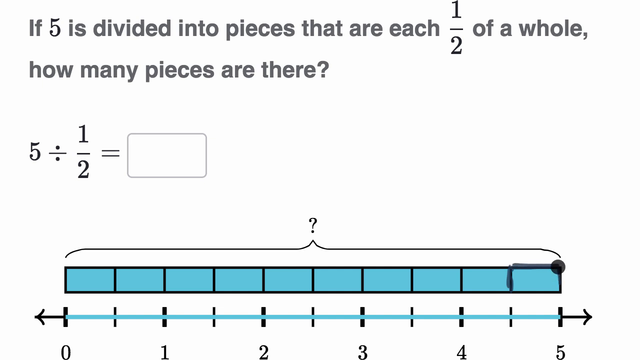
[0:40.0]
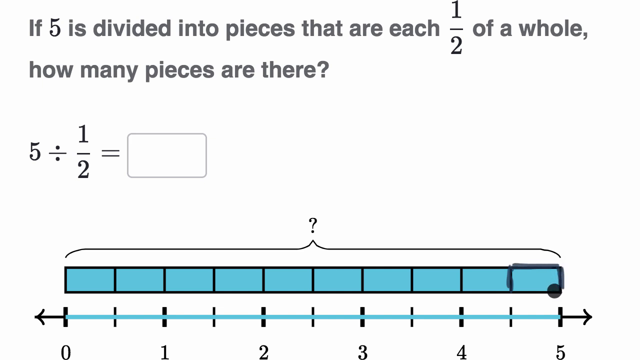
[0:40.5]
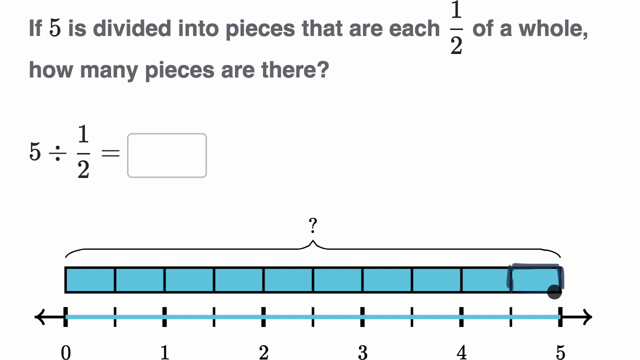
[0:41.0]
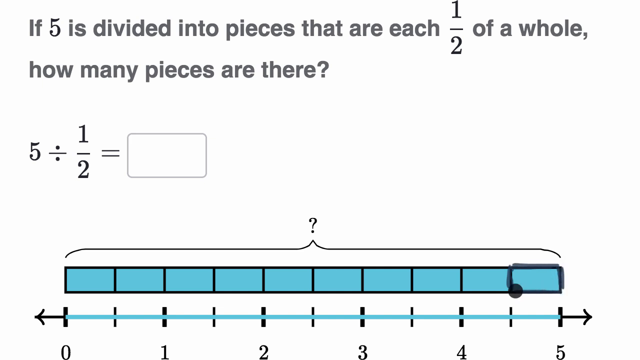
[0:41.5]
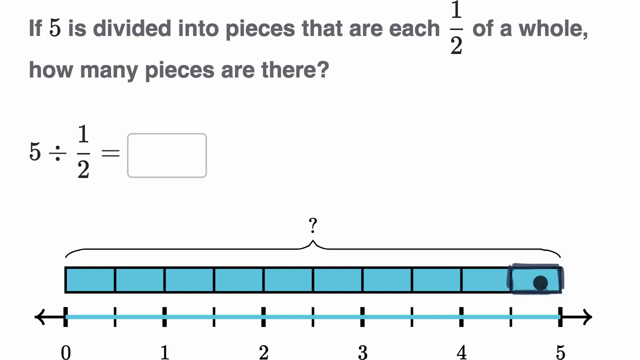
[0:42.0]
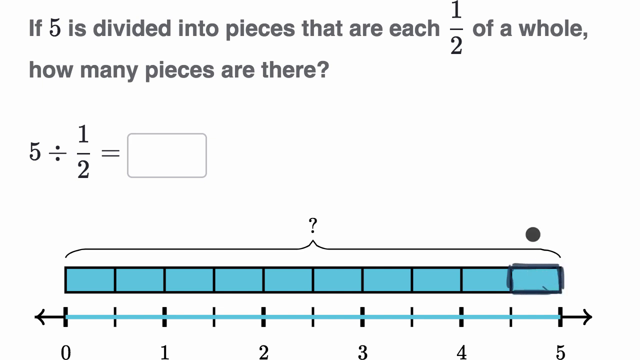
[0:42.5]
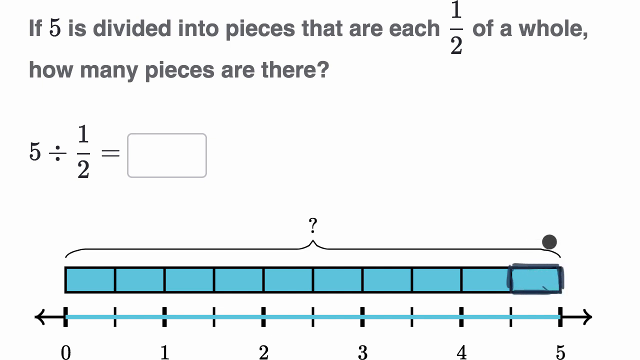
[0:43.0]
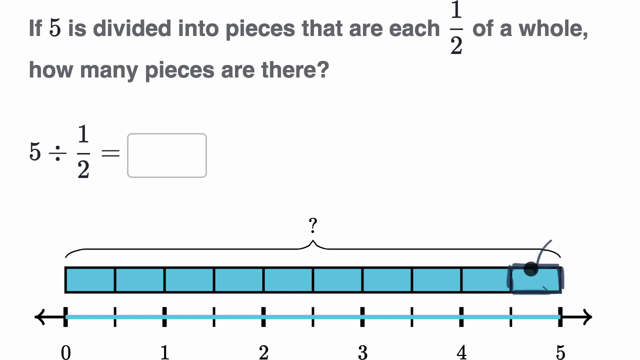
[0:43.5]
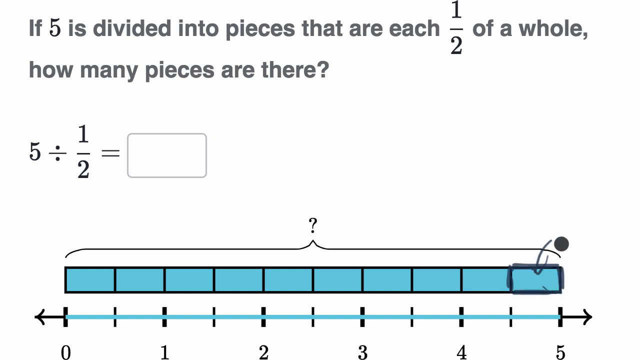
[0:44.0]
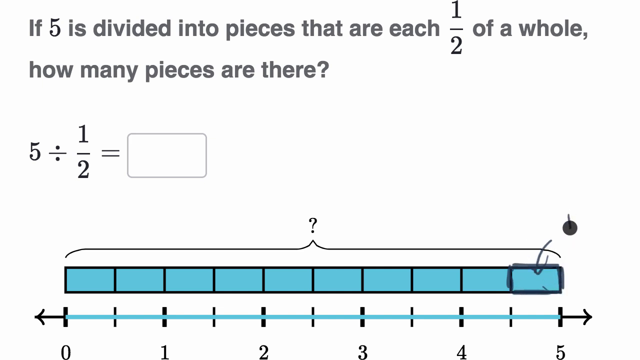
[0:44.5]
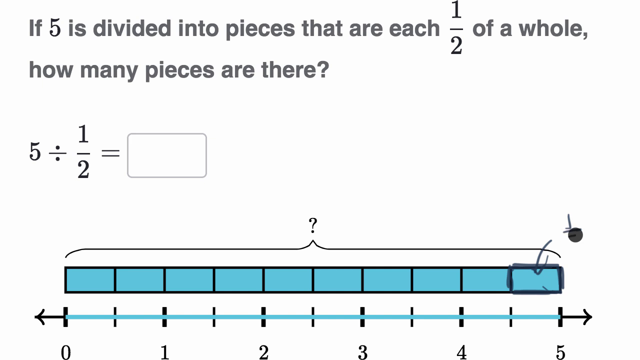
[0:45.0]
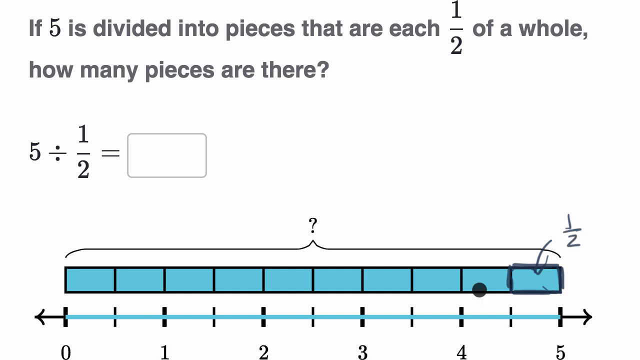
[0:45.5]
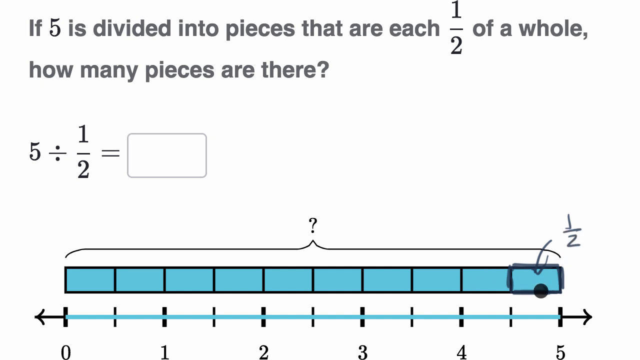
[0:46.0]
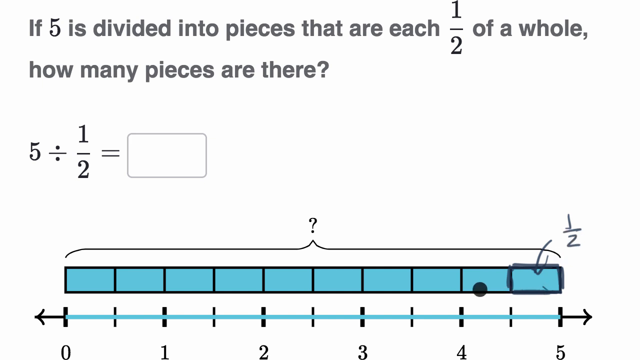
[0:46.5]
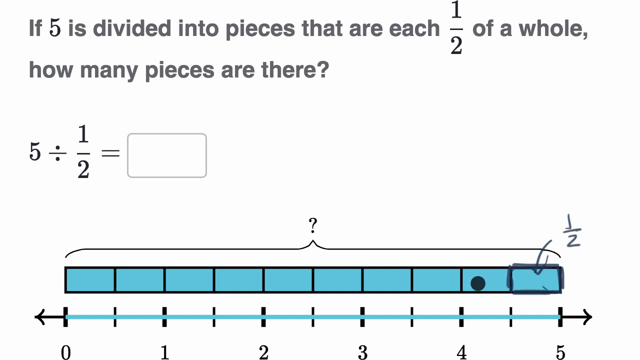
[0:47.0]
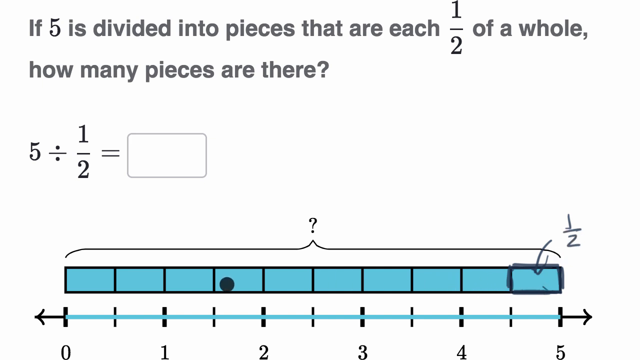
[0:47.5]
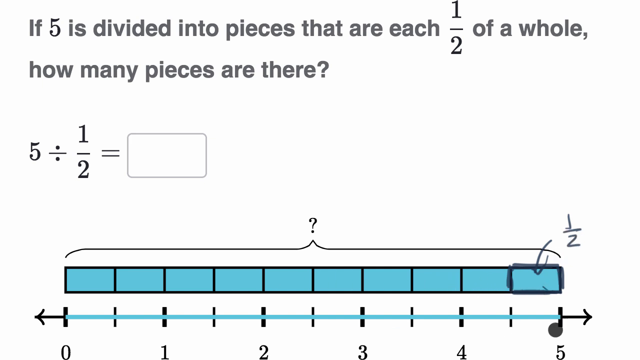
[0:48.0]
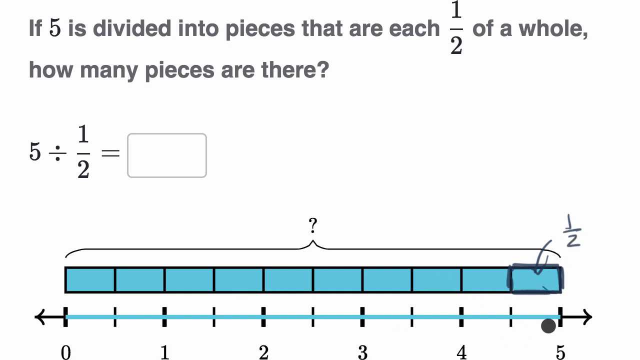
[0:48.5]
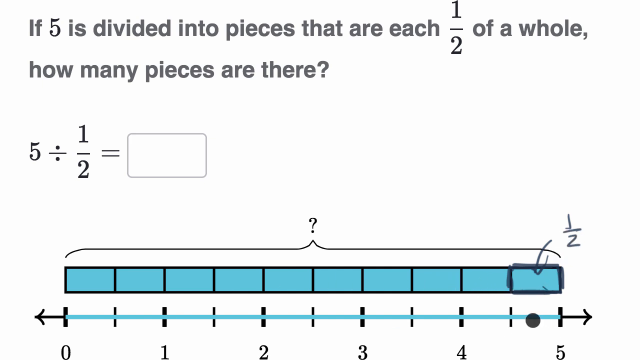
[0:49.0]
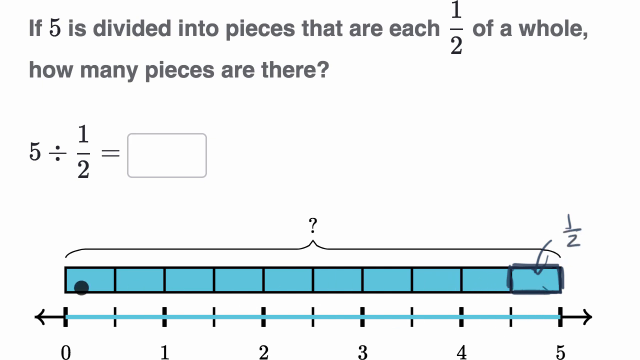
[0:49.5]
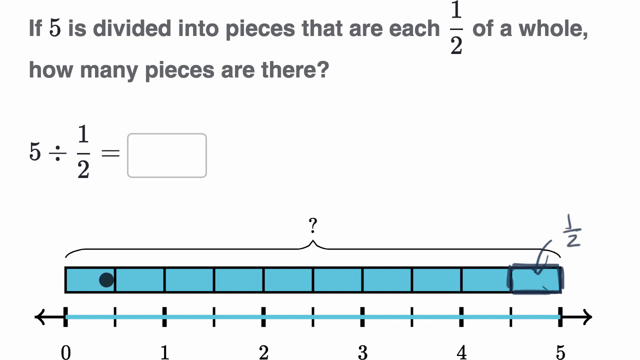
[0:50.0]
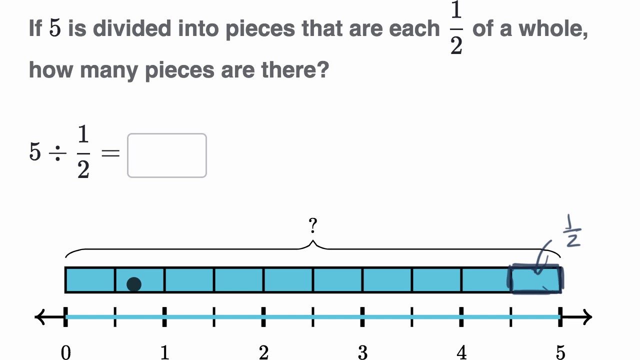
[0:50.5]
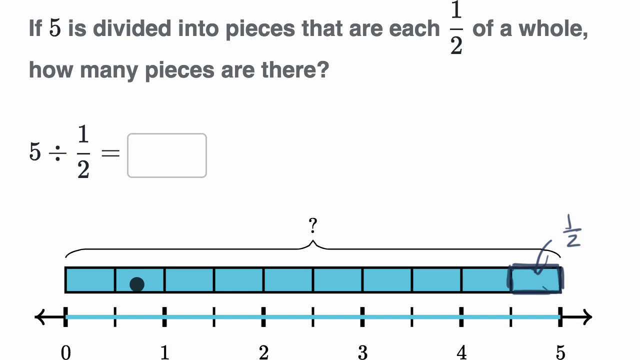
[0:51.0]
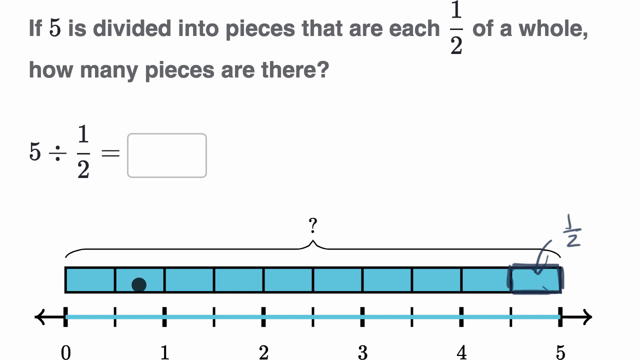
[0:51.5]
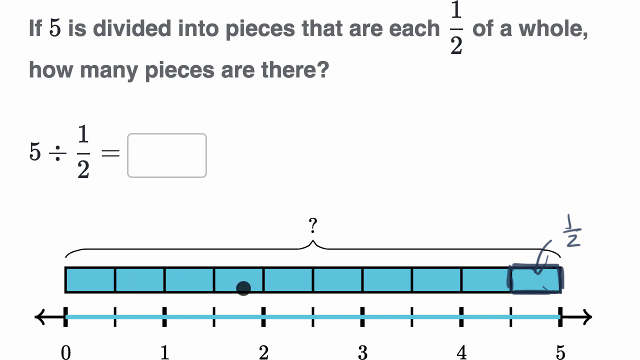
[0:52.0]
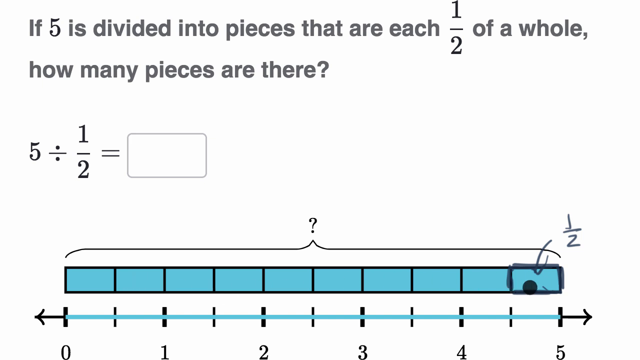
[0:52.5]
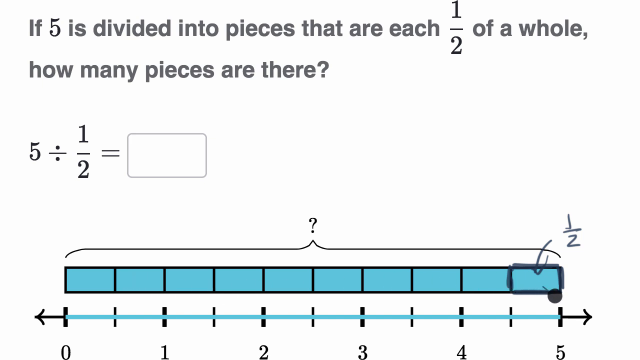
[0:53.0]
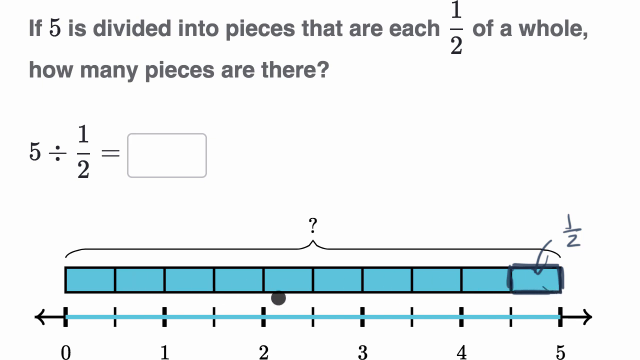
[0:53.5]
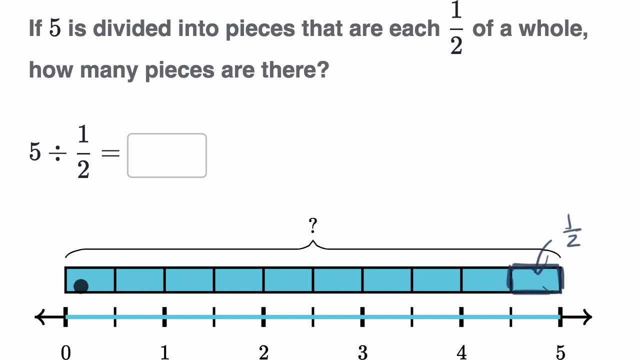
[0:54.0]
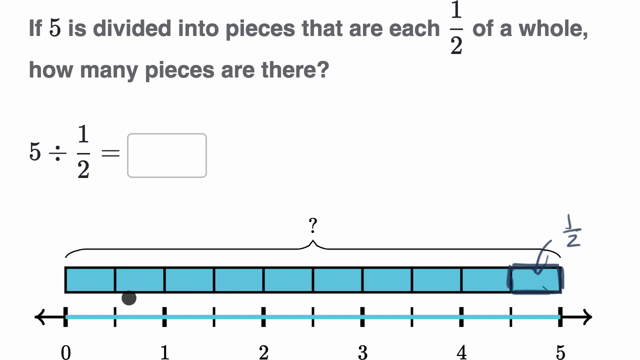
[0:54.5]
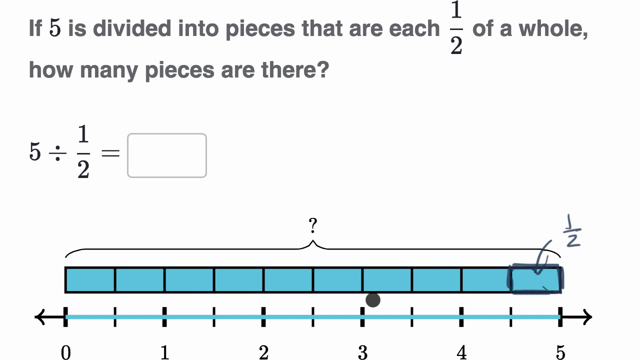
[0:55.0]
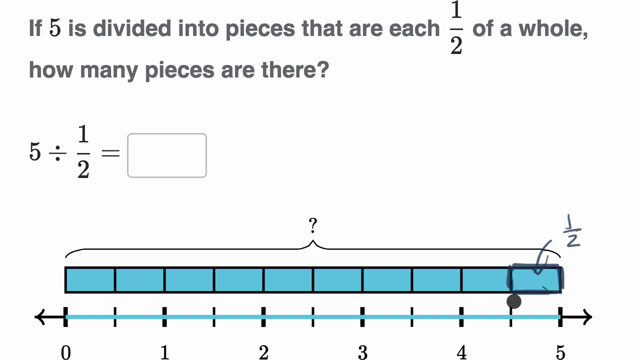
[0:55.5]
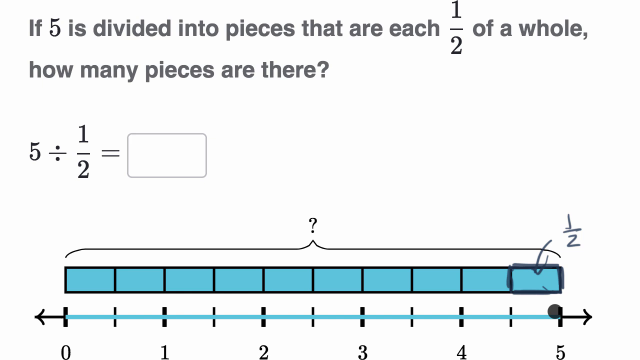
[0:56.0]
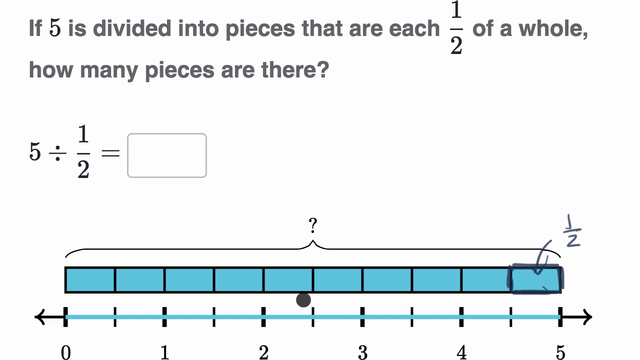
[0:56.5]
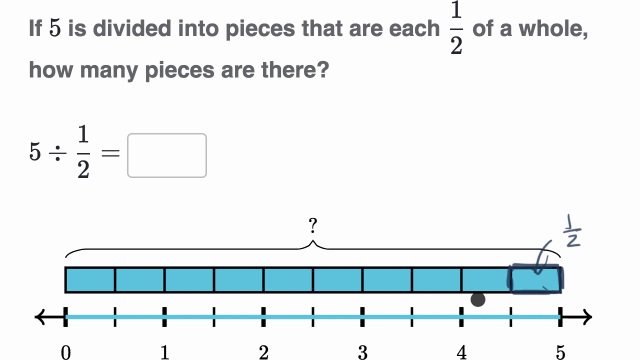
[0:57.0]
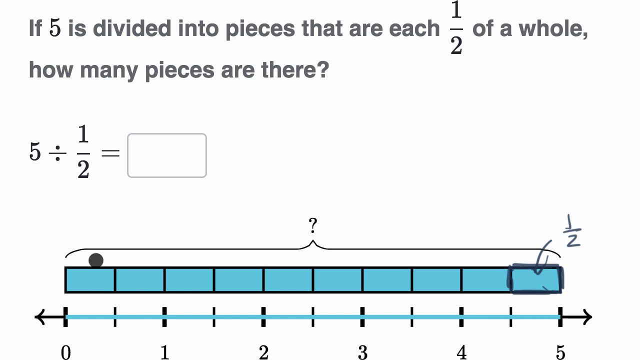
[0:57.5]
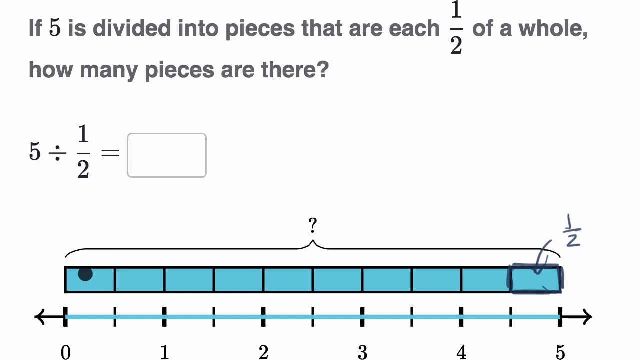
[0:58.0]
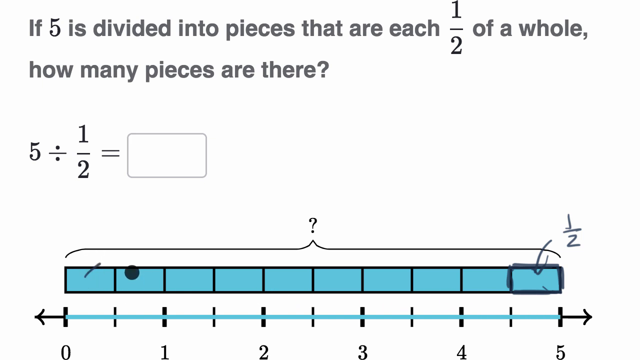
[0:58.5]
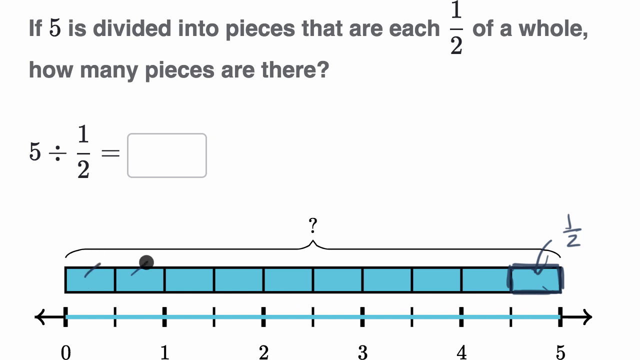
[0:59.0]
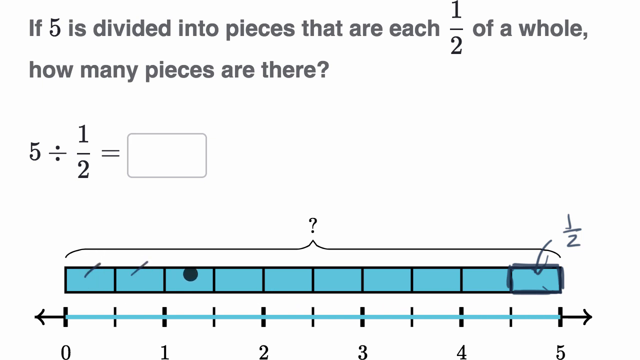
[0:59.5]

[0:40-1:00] On a white background are text at the top, an equation to the left of an empty text entry box in the middle, and a bar and graph at the bottom. In the lower right corner, a circular gray cursor is highlighting the left and top walls of the rightmost section of the blue bar. The cursor highlights the bottom and right walls of that section, then moves up and to the right to draw an arrow pointing down at the rightmost section. It moves up and to the right and writes 1/2 above and to the right of the arrow. The cursor then moves down and to the right, to the left side of the graph, up to the left side of the blue bar, and back and forth right and left several times. From the left side of the blue bar, the cursor begins making gray marks pointing up and to the right in each section, starting from the leftmost section and moving right to the fourth section from the left.